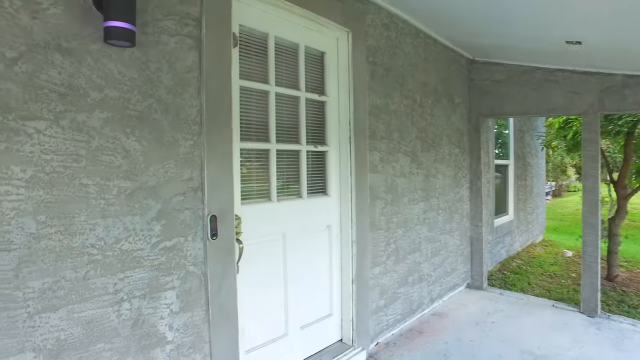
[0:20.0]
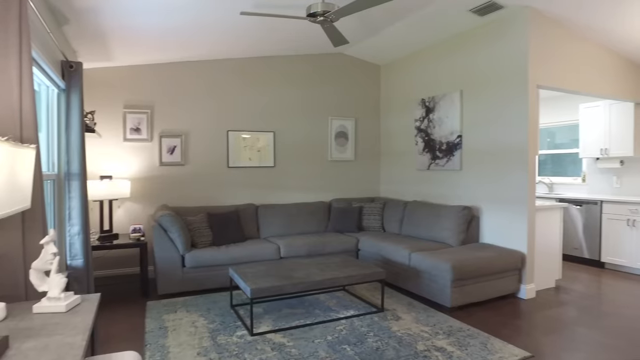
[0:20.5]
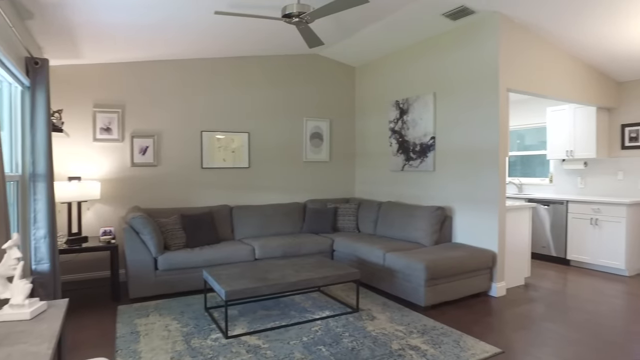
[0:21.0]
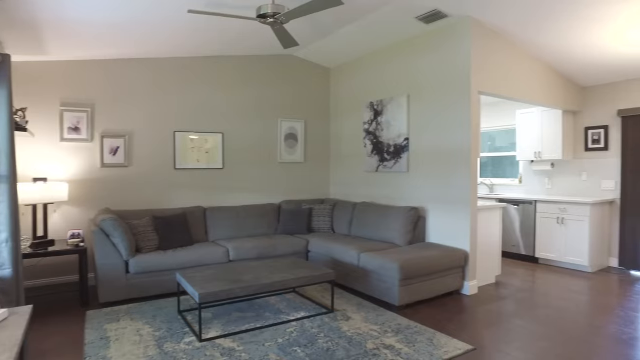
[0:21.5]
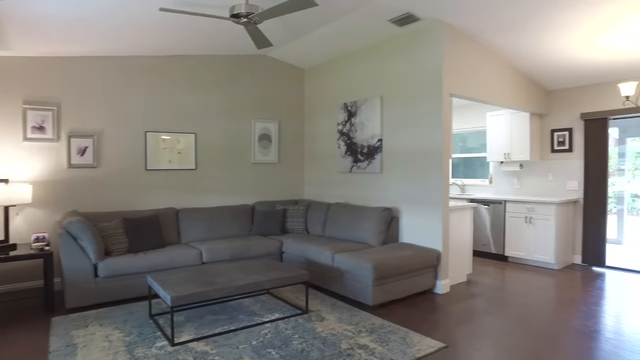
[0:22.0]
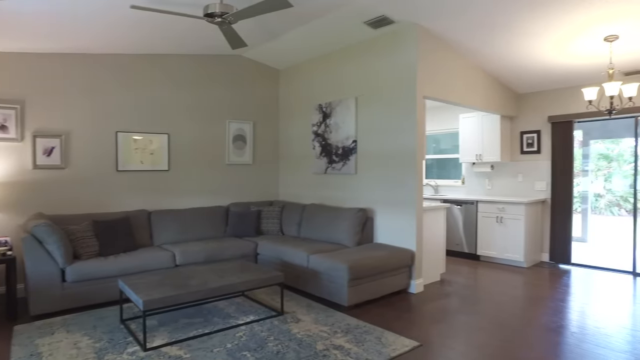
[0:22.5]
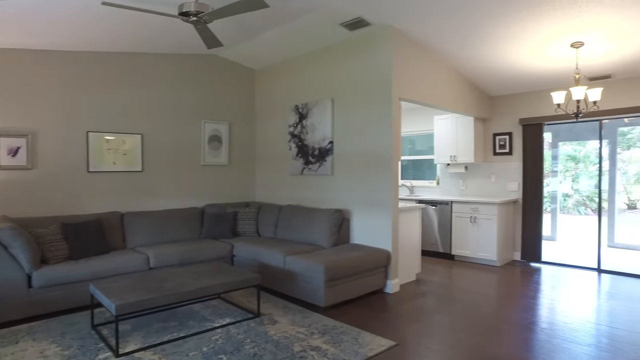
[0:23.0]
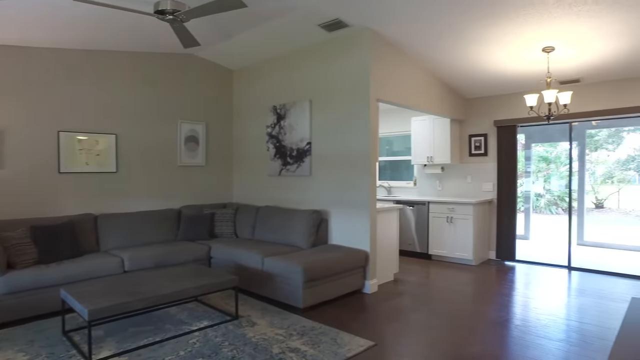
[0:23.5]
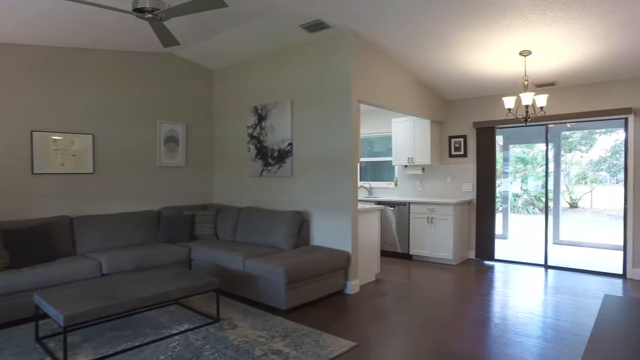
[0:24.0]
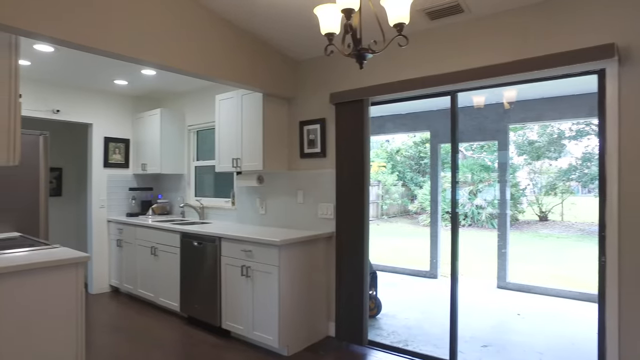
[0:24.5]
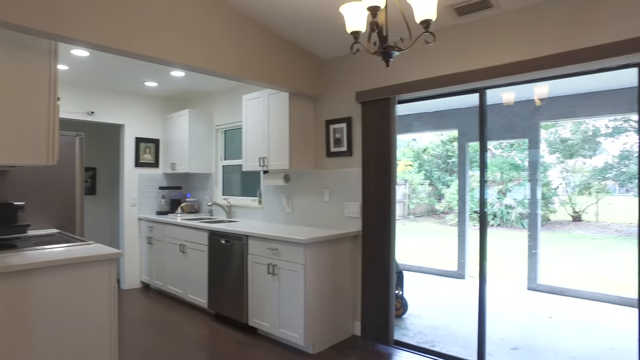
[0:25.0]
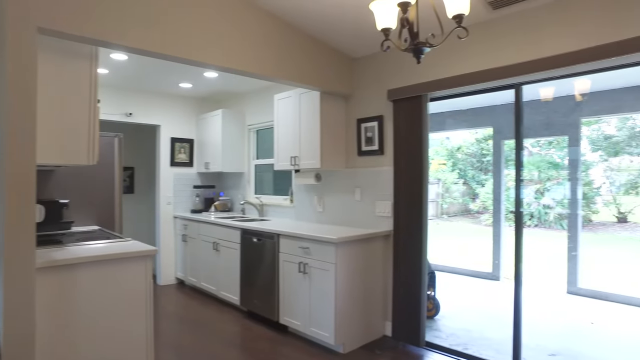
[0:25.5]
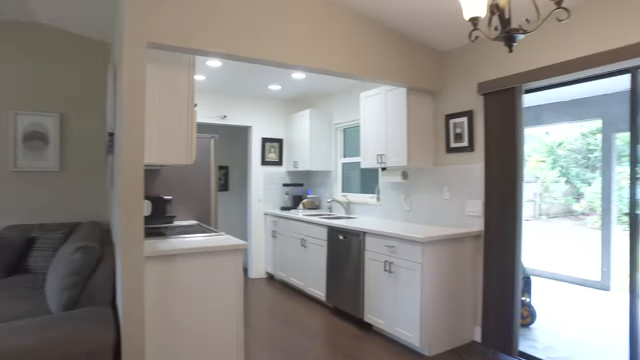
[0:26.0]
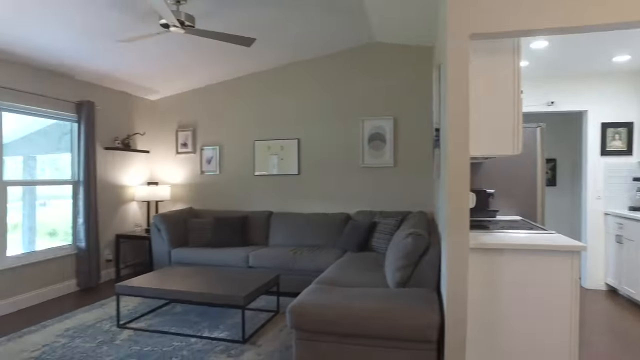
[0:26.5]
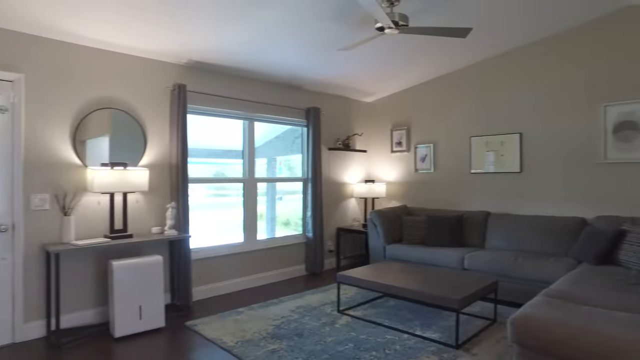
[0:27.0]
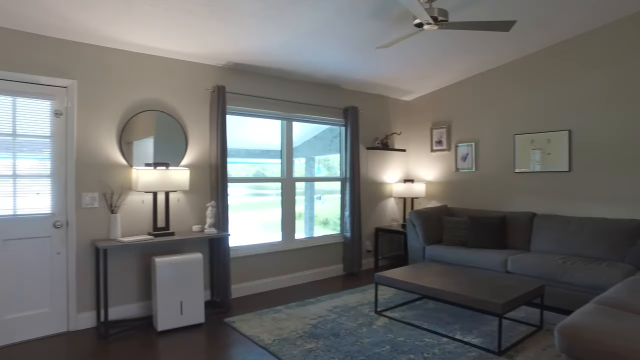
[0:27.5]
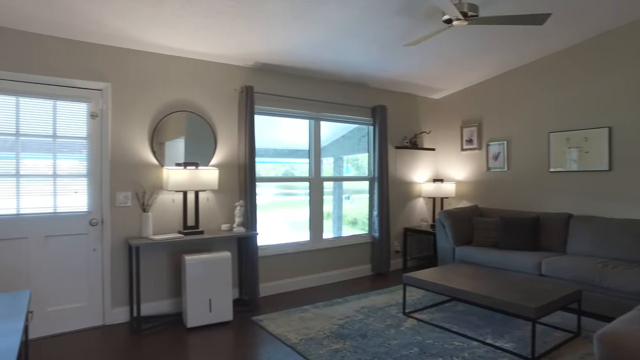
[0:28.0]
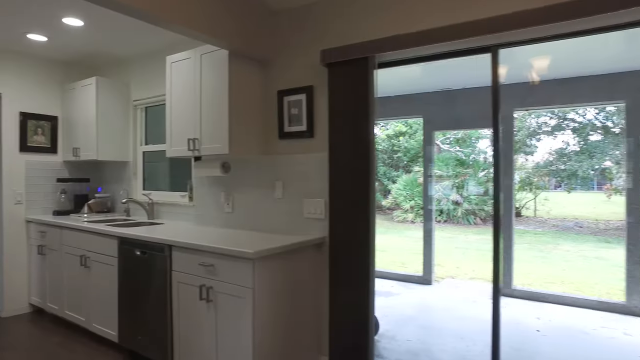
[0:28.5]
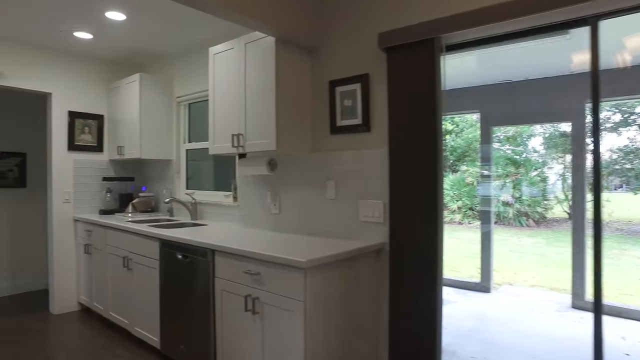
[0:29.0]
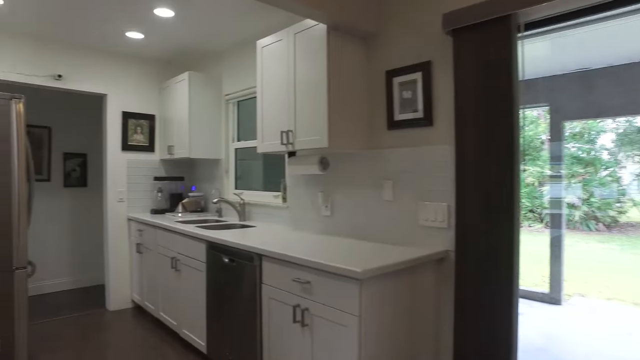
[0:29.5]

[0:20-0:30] The inside of a home is shown, with hardwood floors, sliding doors that lead to the backyard, a wide open kitchen, a living area off of a living area, and a ceiling fan. The property appears to be shown with a drone, giving a feel of being in motion and floating, with a 360 view from every place it floats through. The tour, apparently by drone, covers the inside of the home as well as the outside.